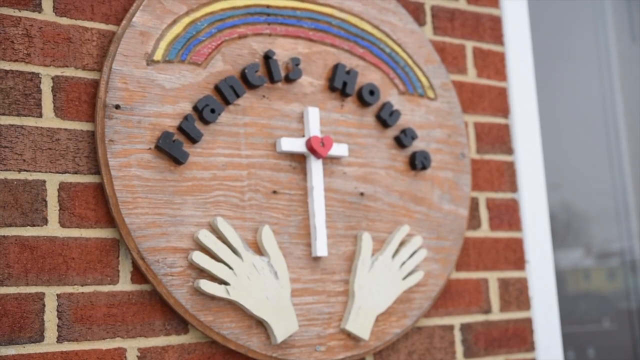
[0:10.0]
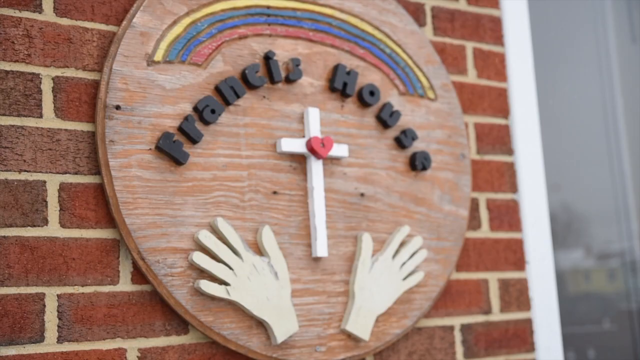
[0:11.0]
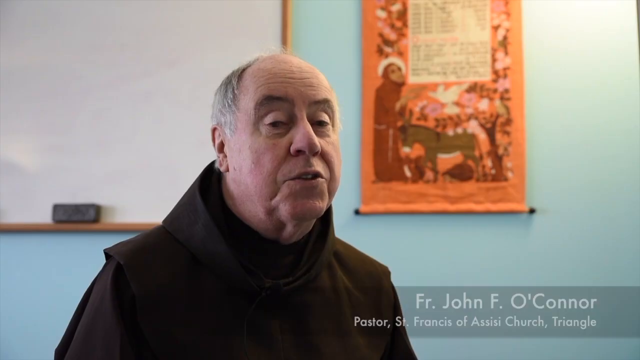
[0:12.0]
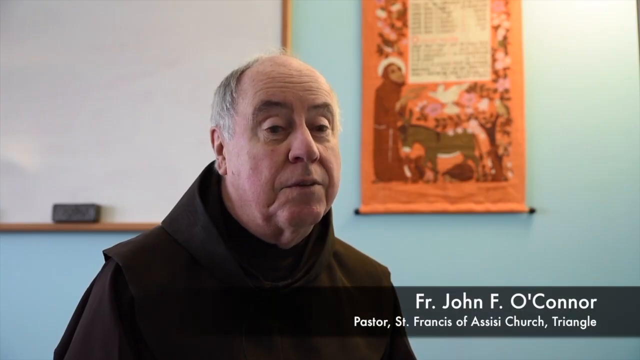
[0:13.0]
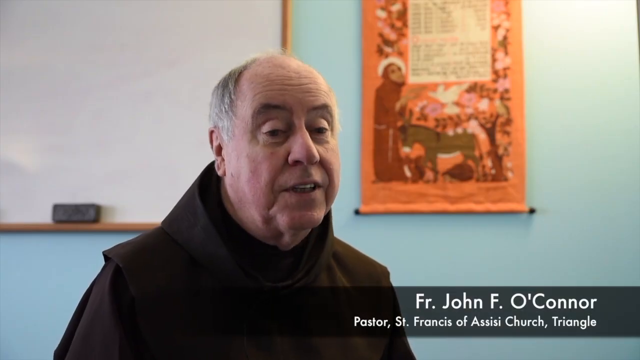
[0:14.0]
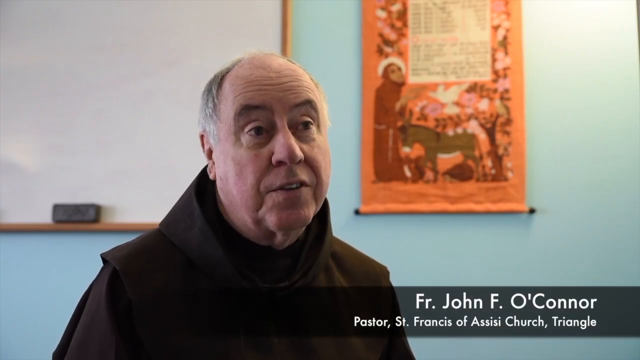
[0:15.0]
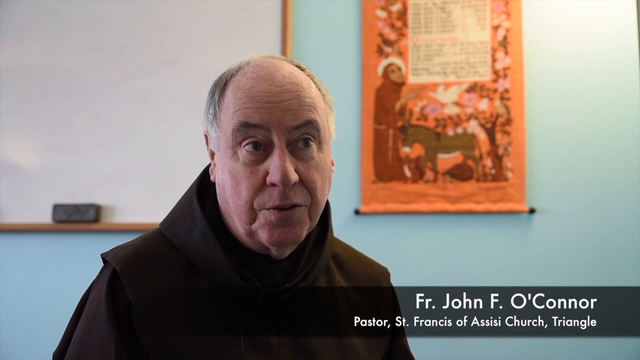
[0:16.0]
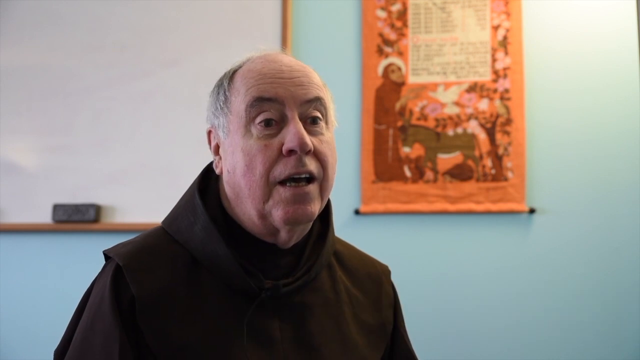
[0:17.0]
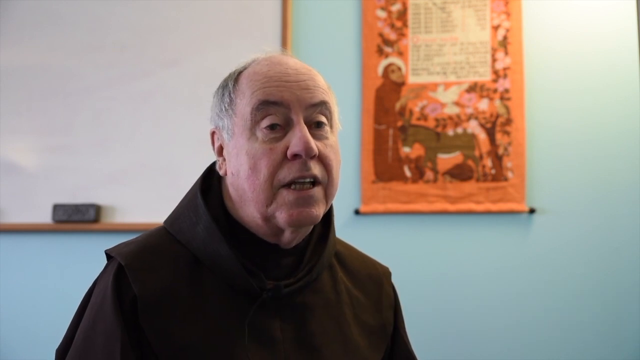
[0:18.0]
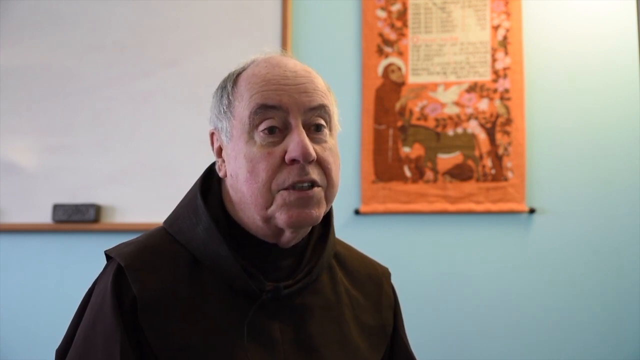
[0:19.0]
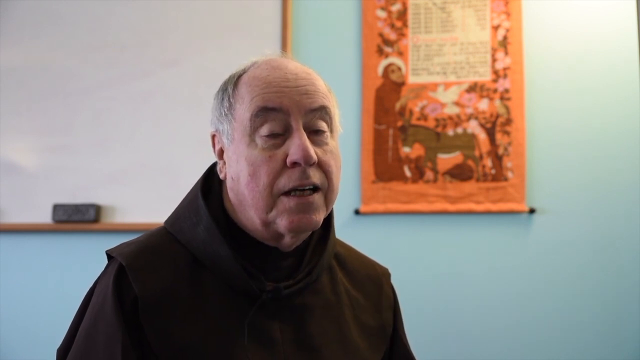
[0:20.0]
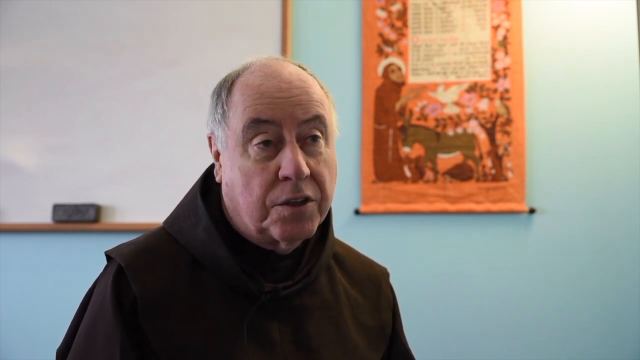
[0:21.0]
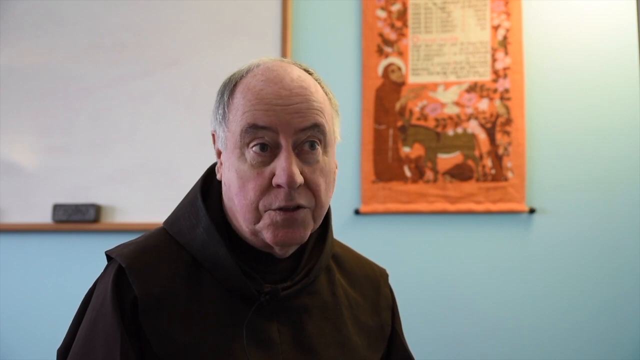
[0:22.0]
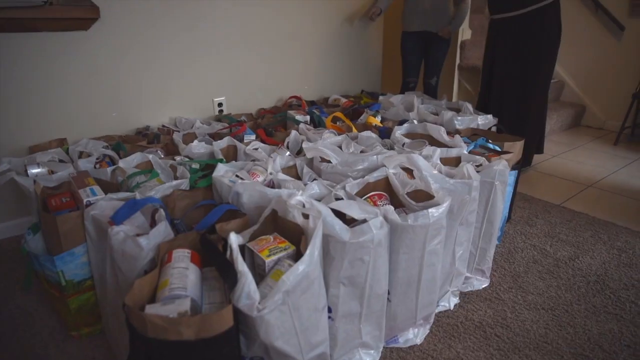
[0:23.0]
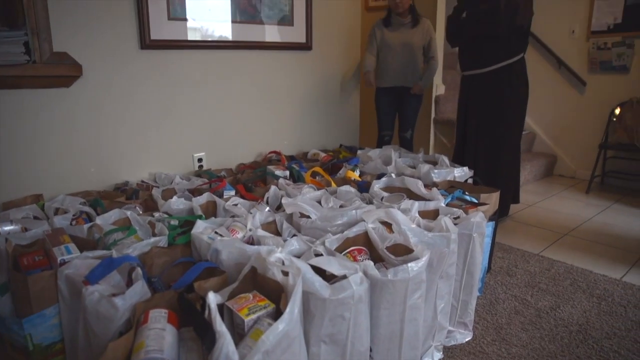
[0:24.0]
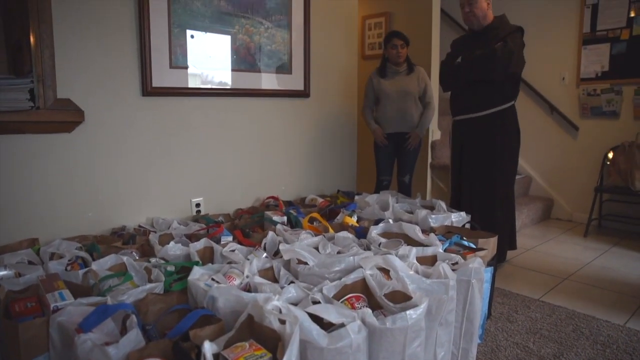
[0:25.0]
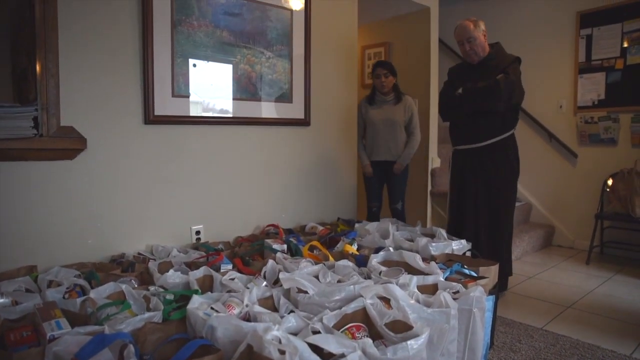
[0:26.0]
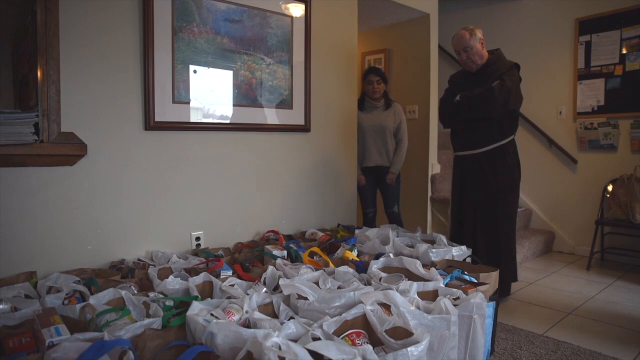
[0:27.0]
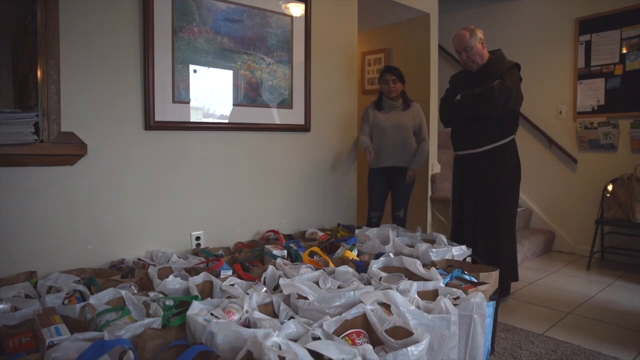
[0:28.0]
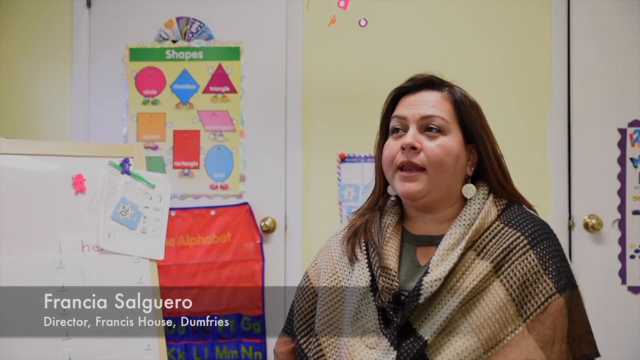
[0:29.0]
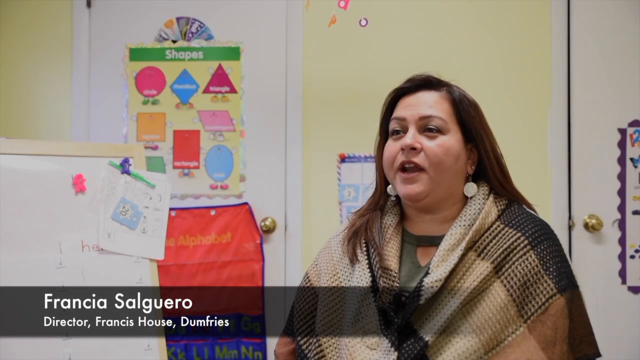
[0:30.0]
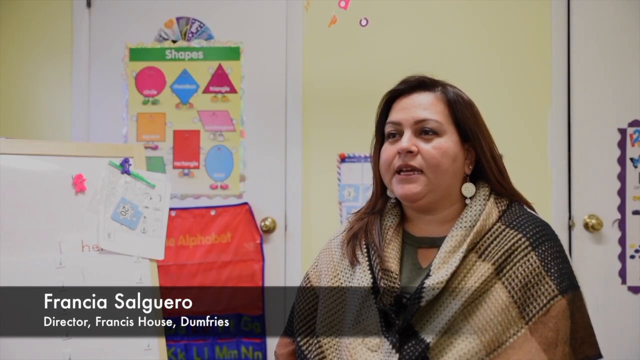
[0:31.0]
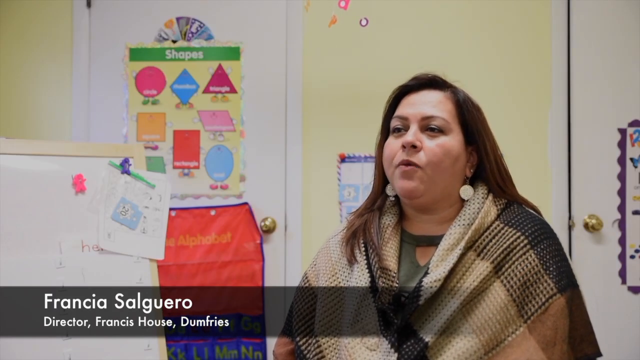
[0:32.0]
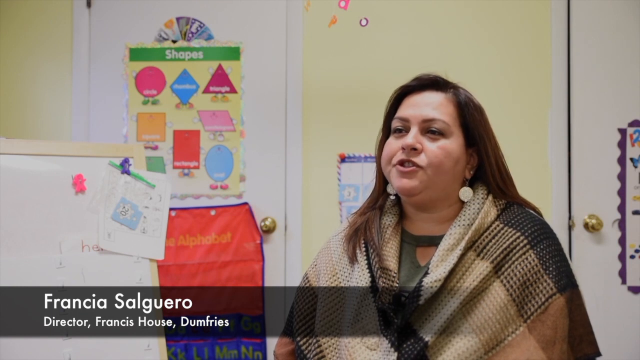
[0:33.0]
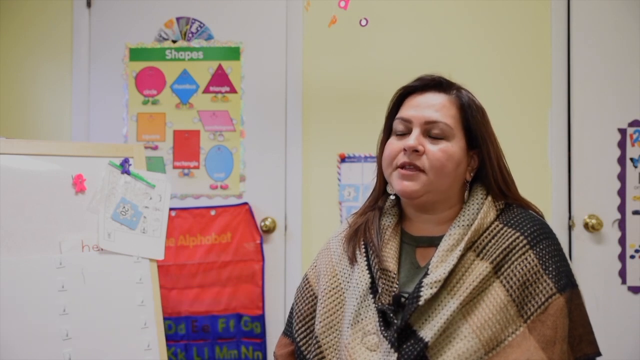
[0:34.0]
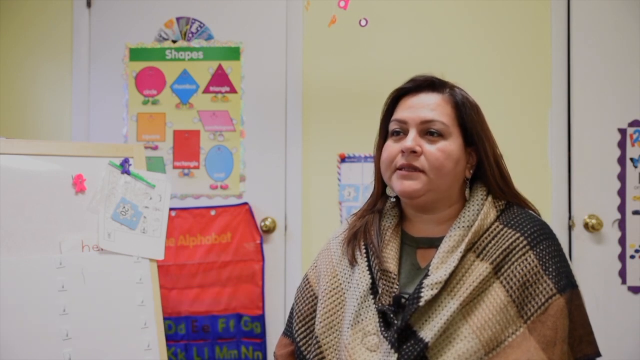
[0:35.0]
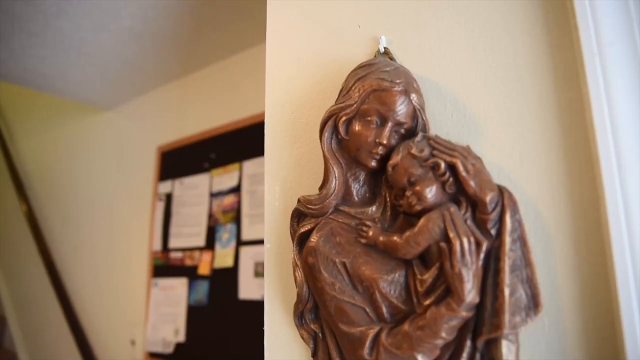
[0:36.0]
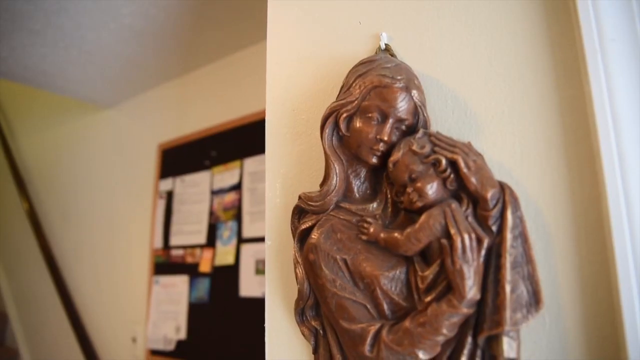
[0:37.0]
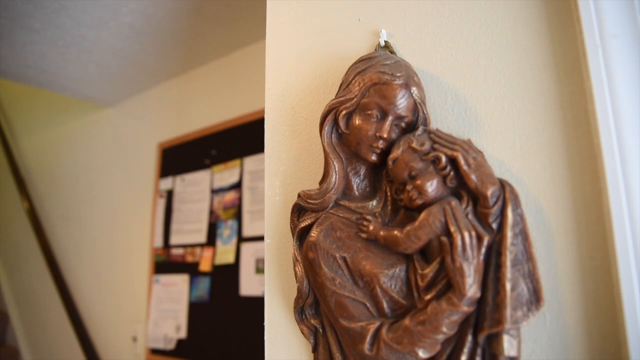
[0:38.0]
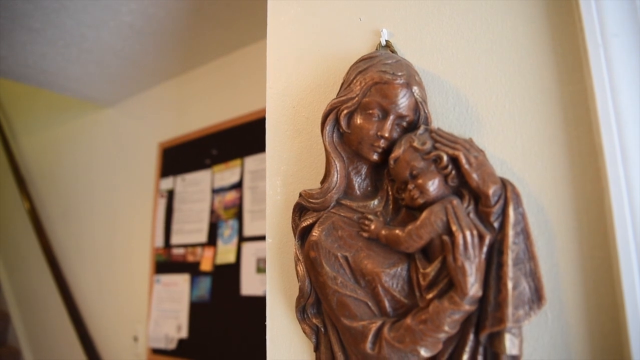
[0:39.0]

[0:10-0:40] A rainbow-coloured sign on the front of the house shows a white cross with a red heart in the middle and two white hands stretched out. A man who is probably in his late 60s, wearing a black sweater, sits in the house and speaks to the camera. His name is Father John F. O'Connor, and St. Francis of Assisi Church in Triangle is named. Behind him is a wall painted blue and a whiteboard. Many goods and items are visible in the same video. The man folds his hands. A lady by the door looks at an item. There is an artwork on the wall, and the house has little illumination.